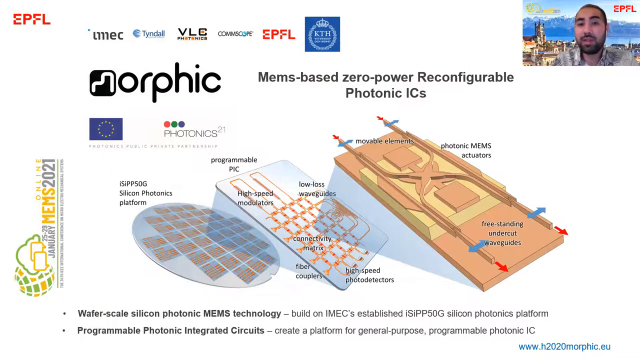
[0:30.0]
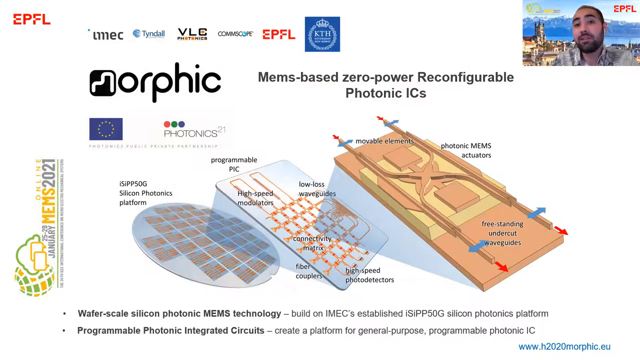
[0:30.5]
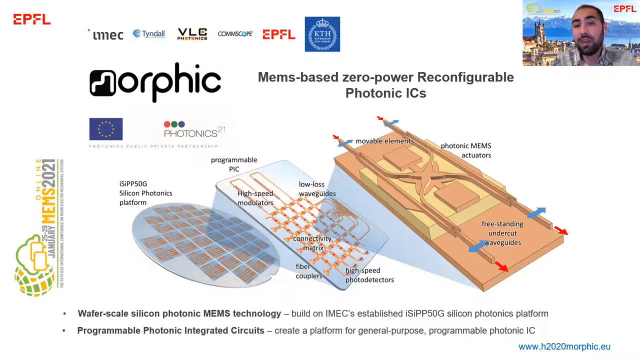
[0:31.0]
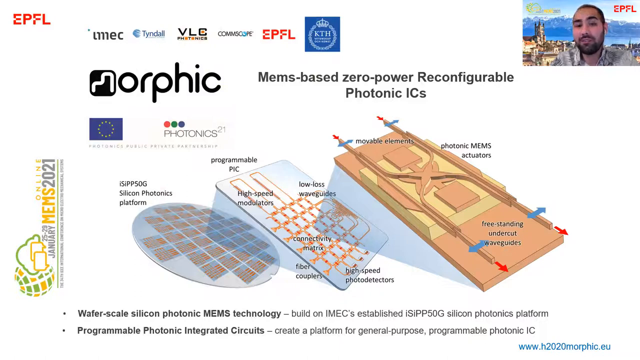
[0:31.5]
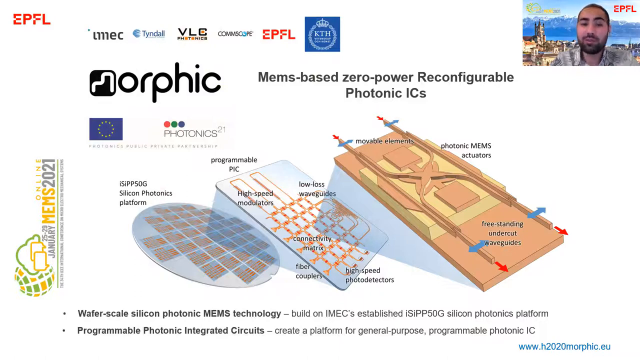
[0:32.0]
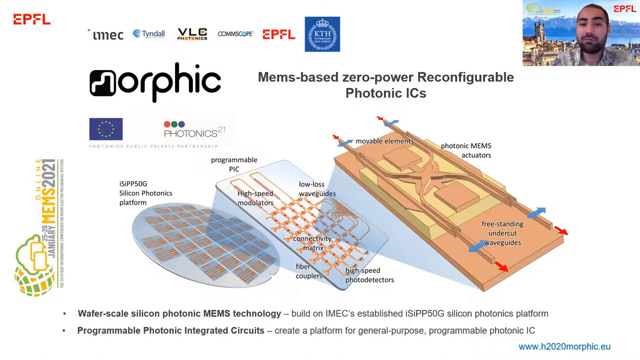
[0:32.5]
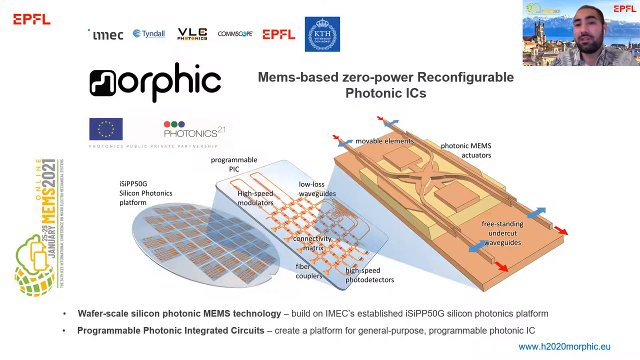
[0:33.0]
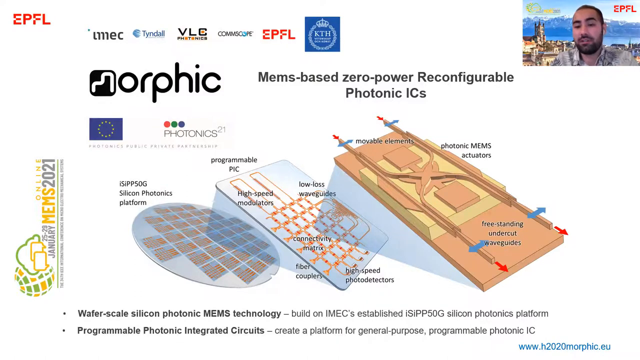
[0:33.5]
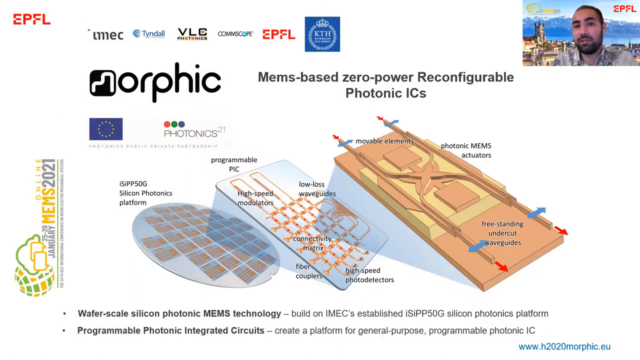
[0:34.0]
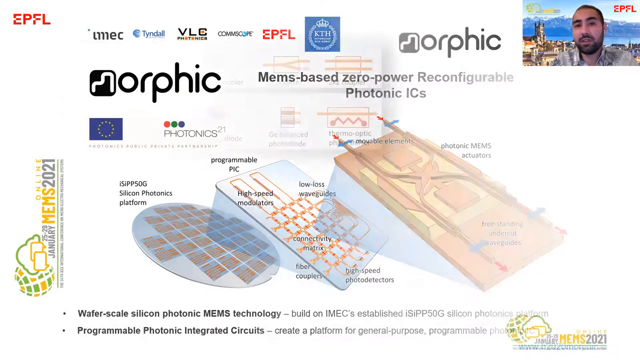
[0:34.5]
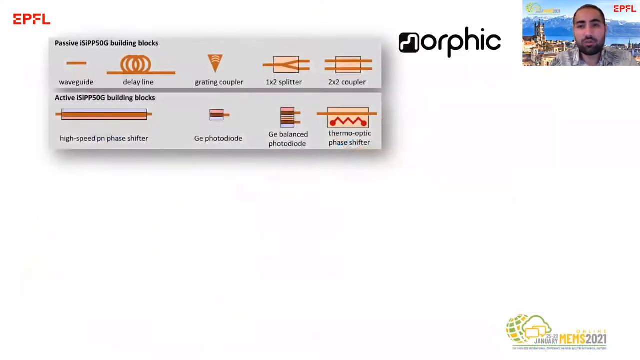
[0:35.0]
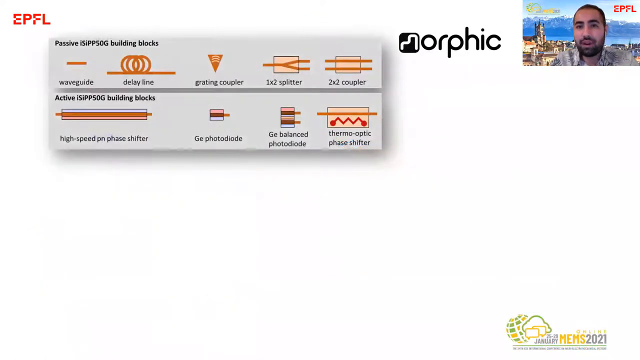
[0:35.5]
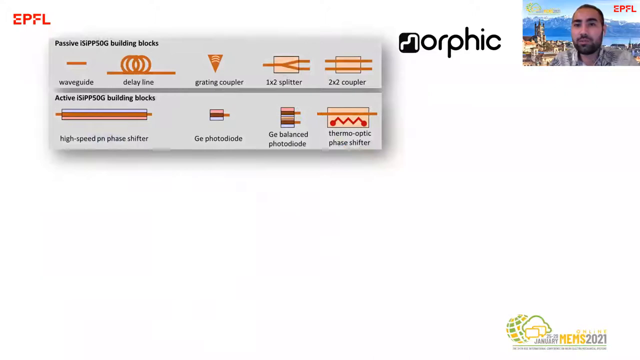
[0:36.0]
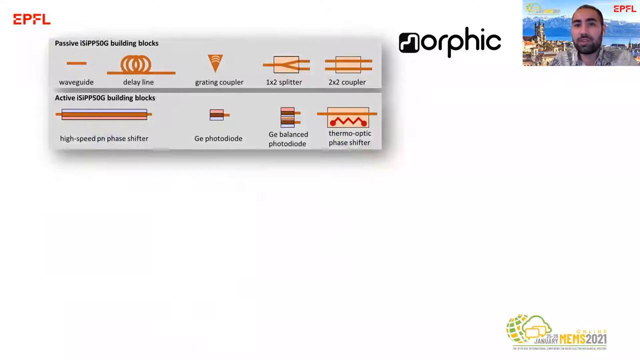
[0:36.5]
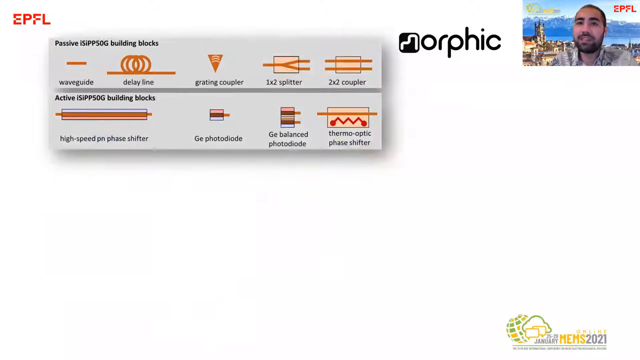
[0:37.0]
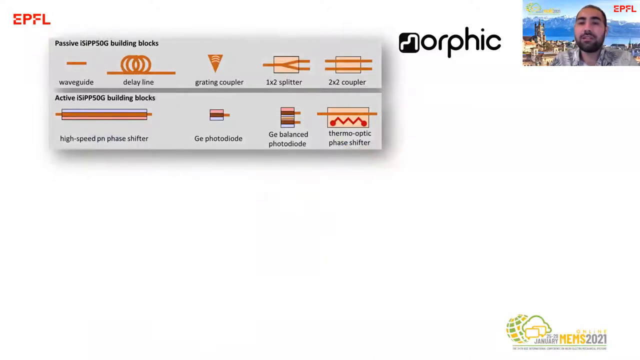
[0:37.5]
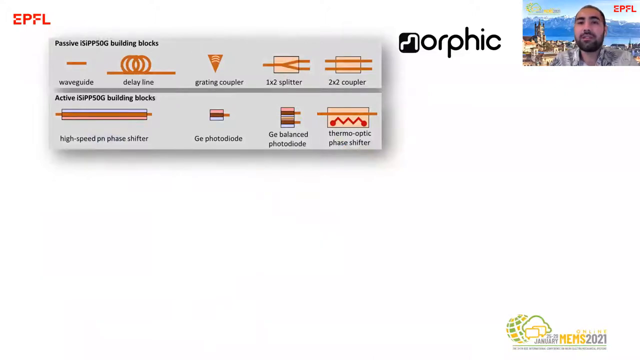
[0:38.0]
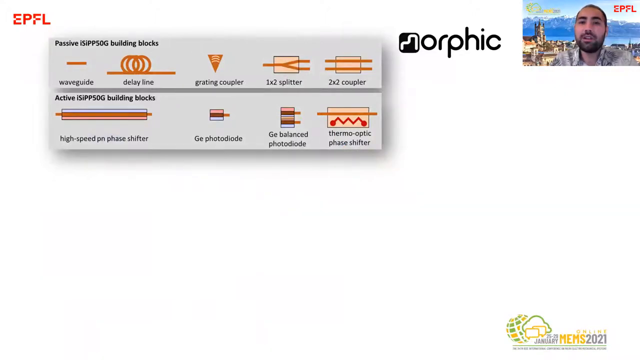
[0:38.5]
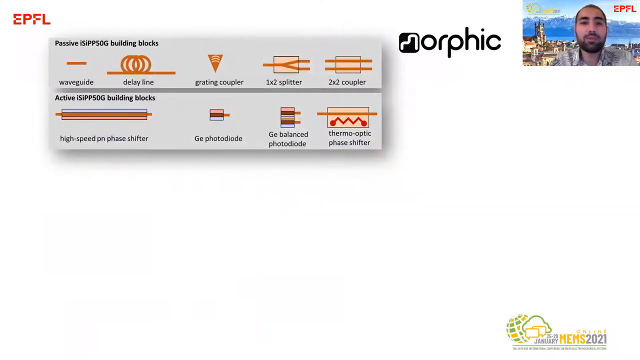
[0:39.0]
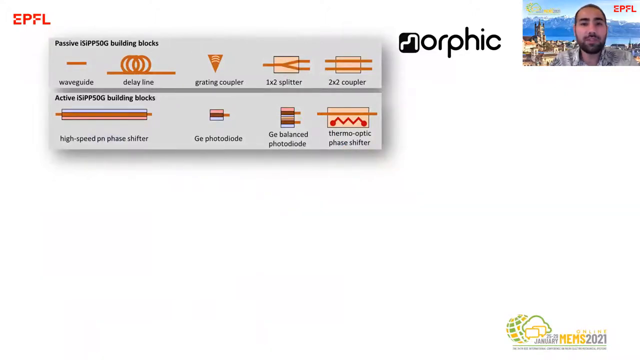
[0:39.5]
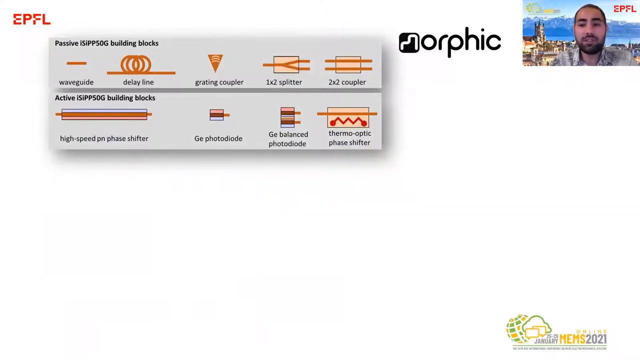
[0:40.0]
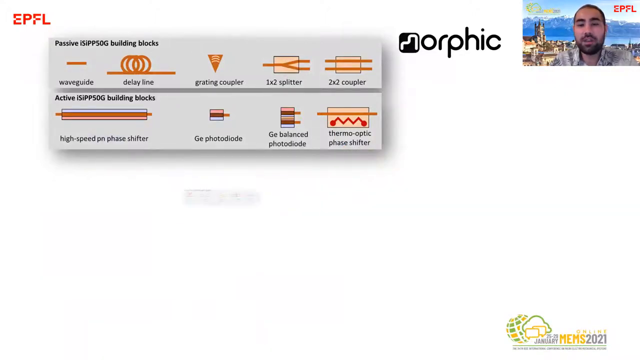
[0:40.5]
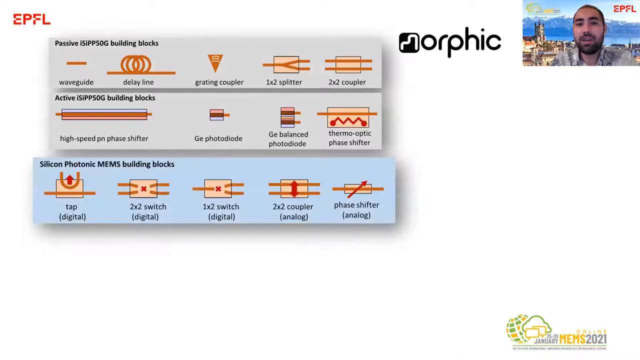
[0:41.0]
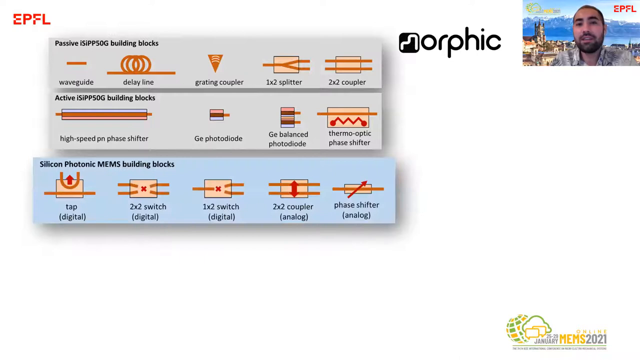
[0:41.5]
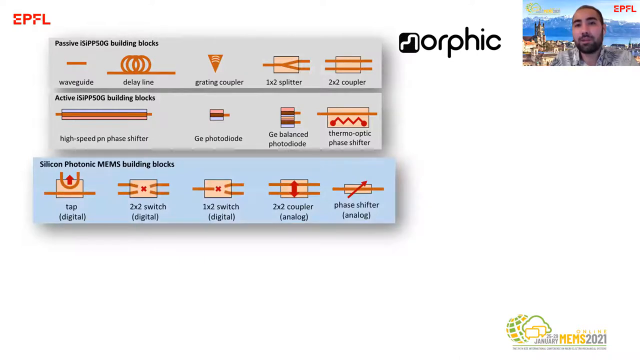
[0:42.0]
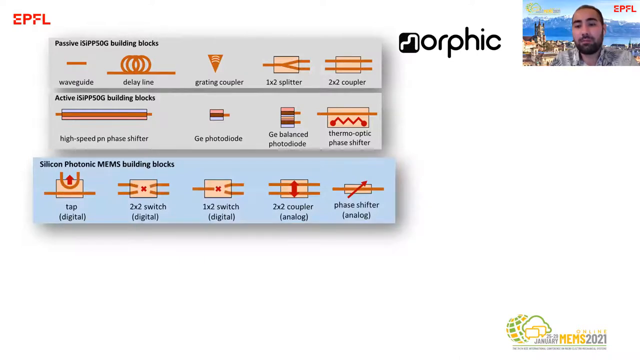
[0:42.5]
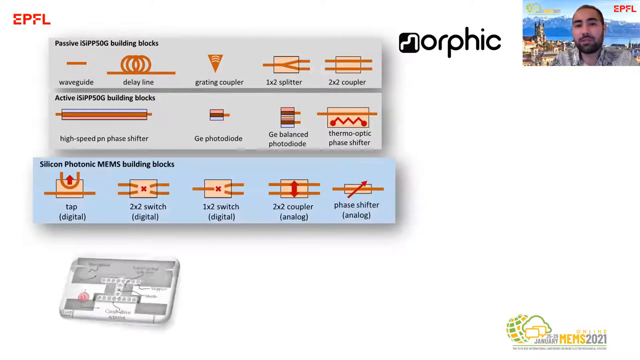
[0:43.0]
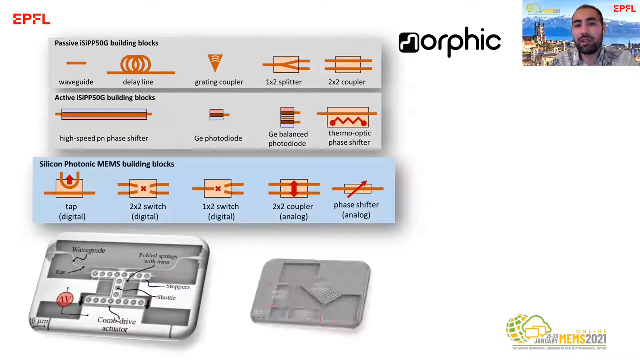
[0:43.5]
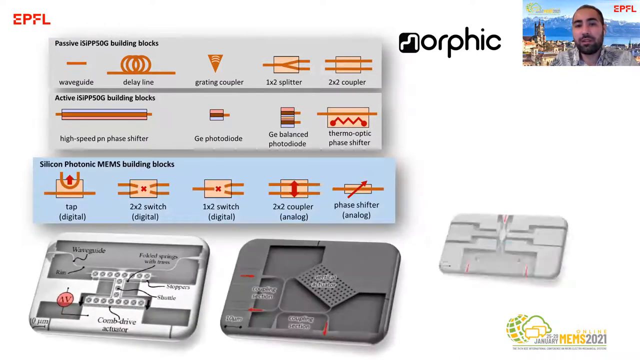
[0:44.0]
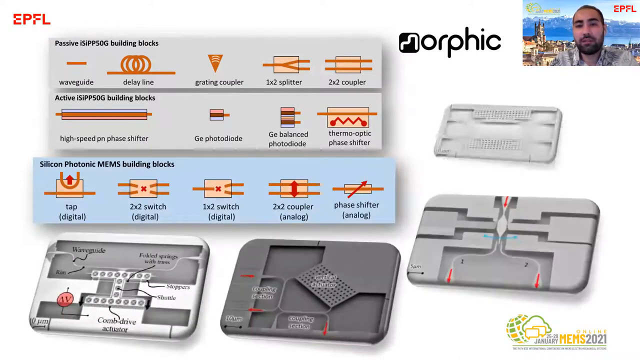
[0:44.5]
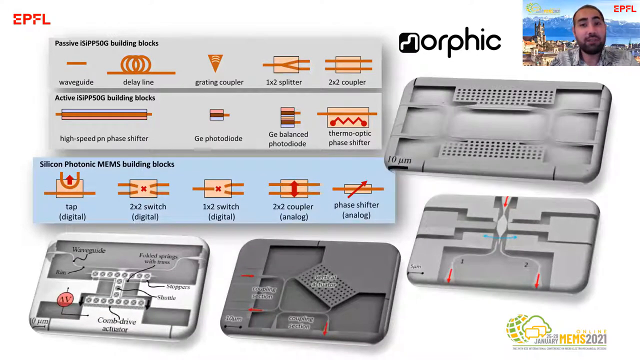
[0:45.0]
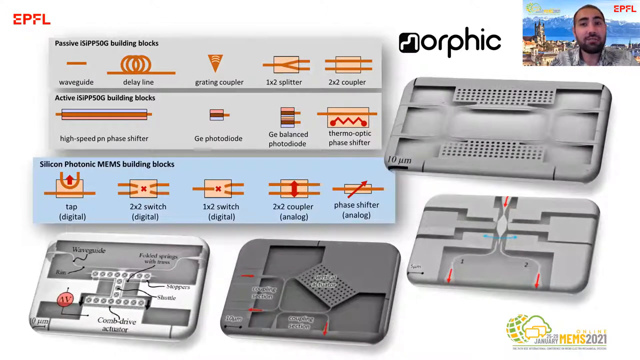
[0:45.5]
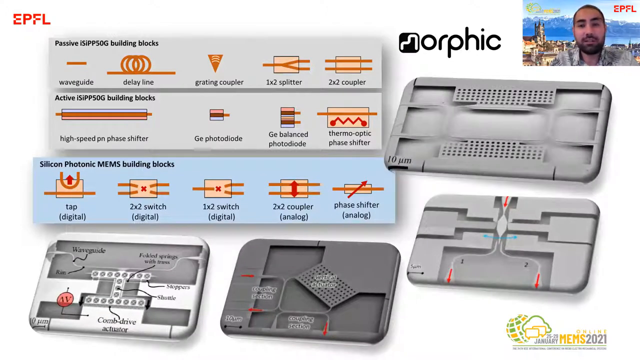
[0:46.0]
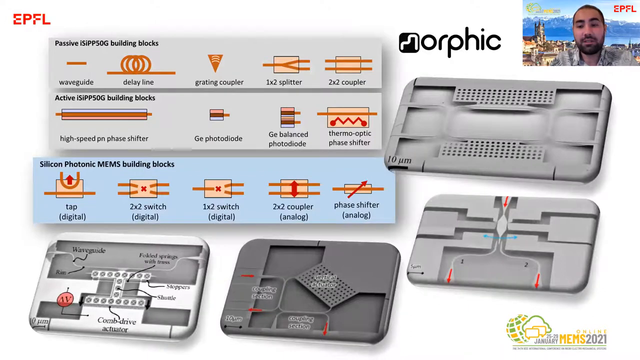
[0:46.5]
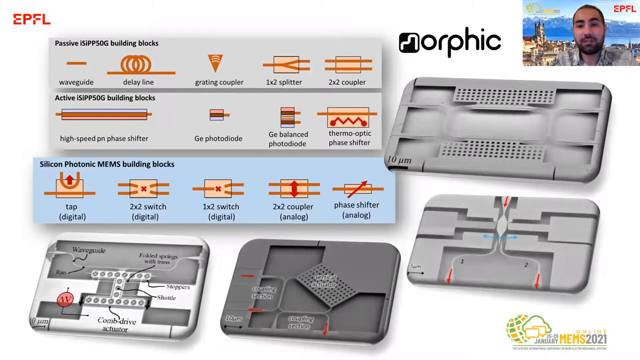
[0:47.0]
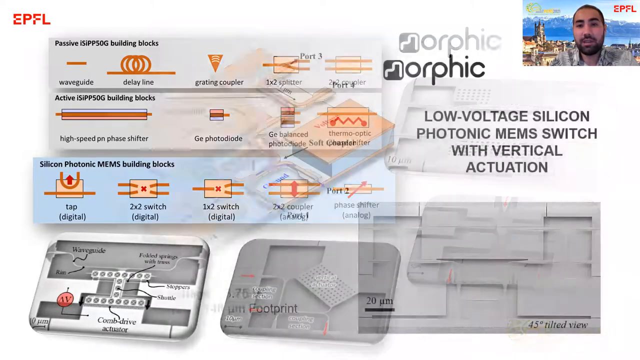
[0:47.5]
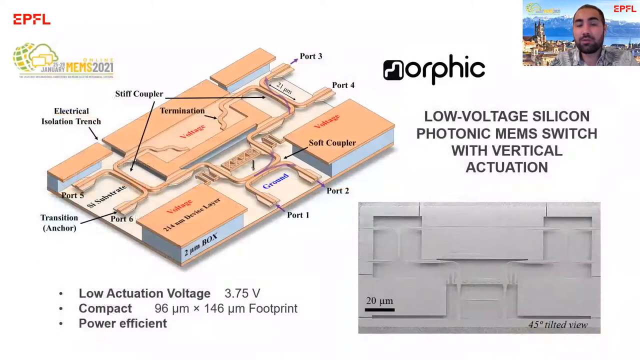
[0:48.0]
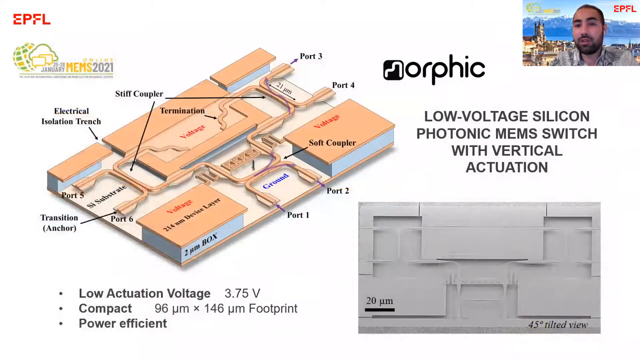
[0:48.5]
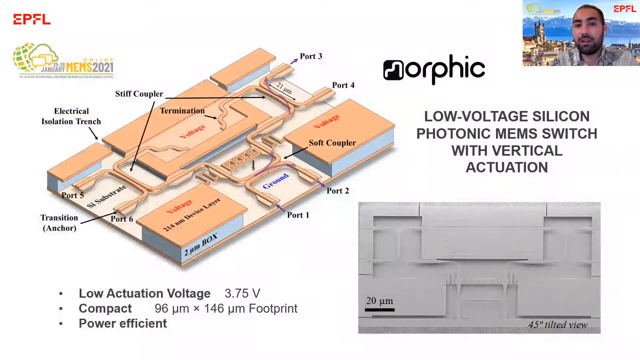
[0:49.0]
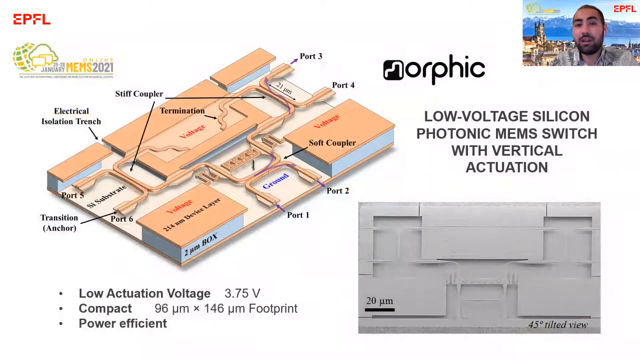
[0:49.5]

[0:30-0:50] The man in the upper right of the frame keeps explaining how the MEMS units unite into a bigger, programmable silicon platform made of these small elements. He then changes the slide to show how the building blocks are composed: one group includes a waveguide, a delay line, a grating coupler, a 1x2 splitter and a 2x2 coupler; another group of active building blocks includes a high-speed phase shifter, a GE photodiode, a GE balanced photodiode and a thermo-optic phase shifter. He points out which of these parts are in each part of the photonic MEMS, then shows various examples of the MEMS, each containing some of the building blocks shown before.